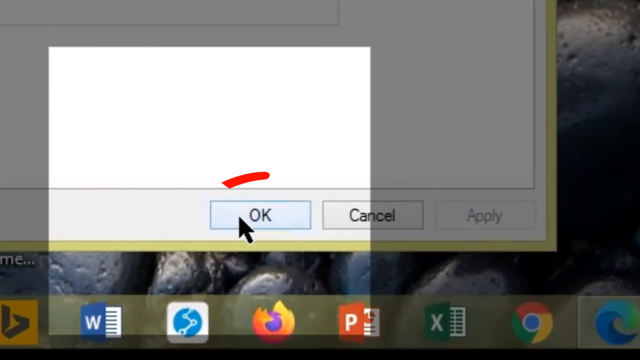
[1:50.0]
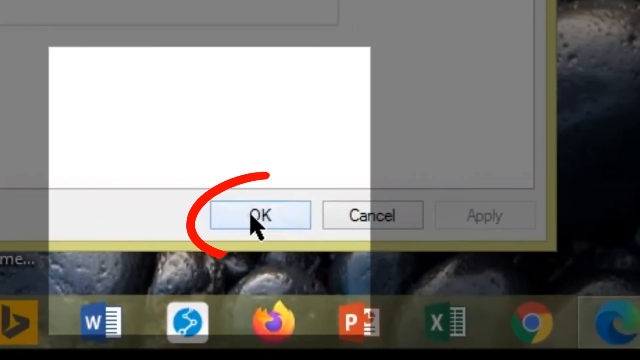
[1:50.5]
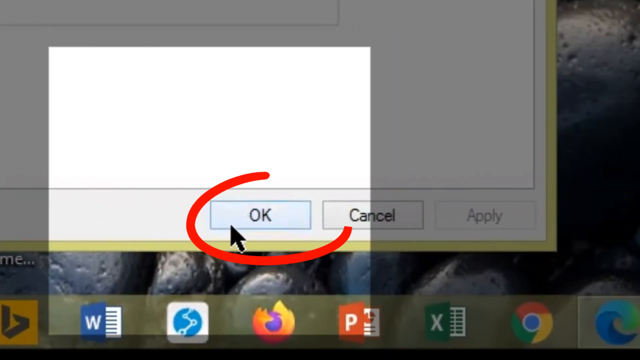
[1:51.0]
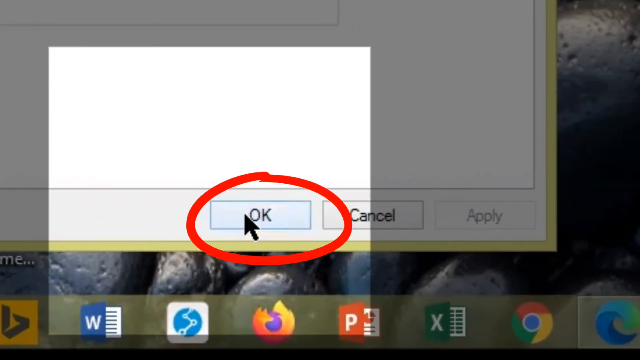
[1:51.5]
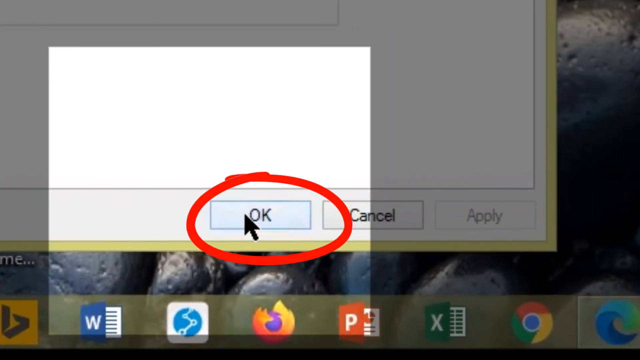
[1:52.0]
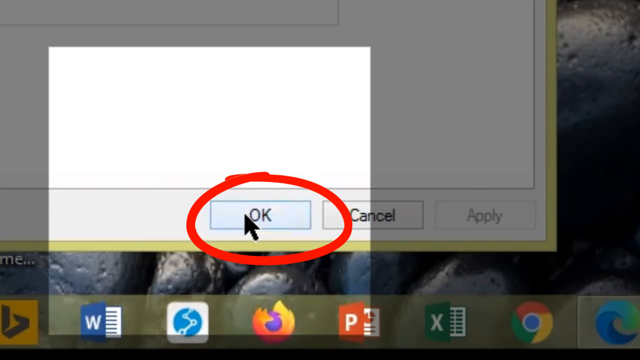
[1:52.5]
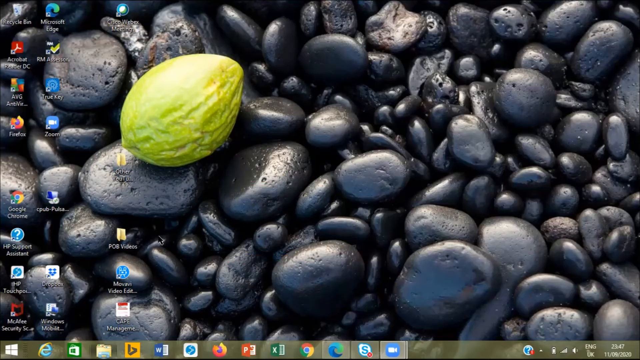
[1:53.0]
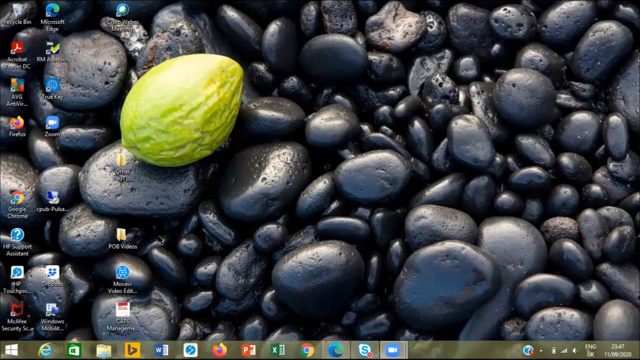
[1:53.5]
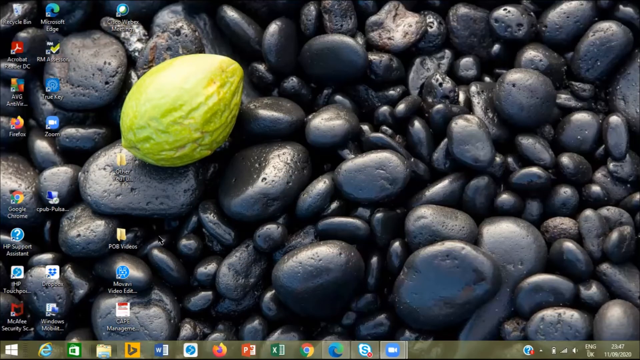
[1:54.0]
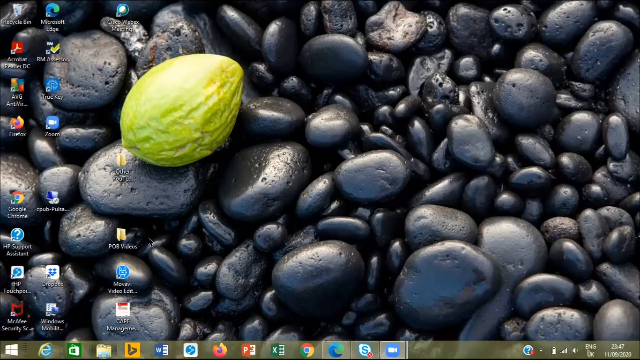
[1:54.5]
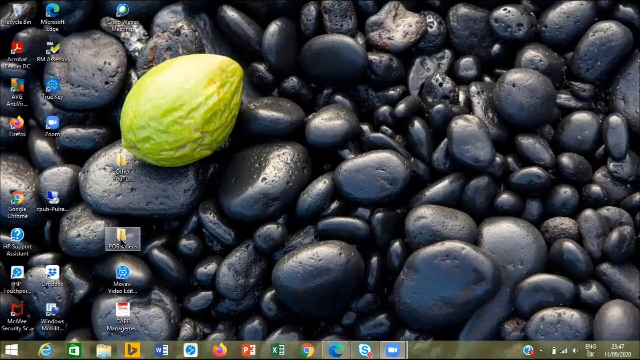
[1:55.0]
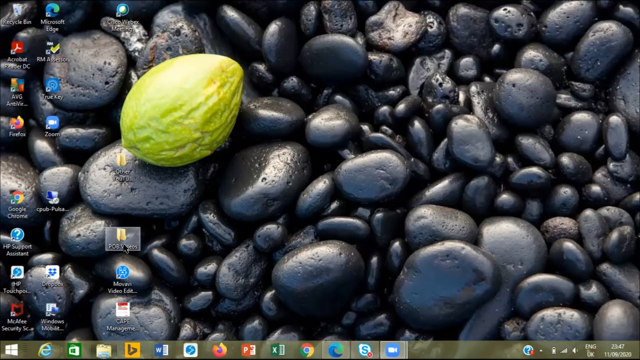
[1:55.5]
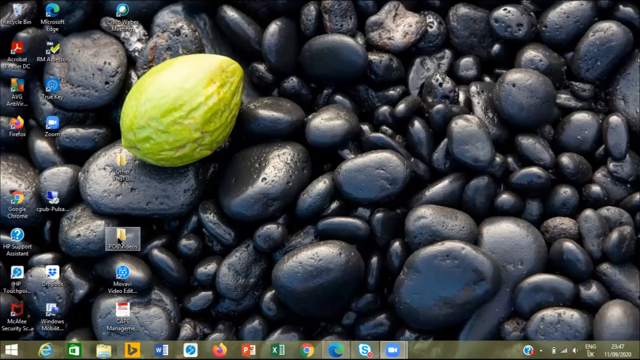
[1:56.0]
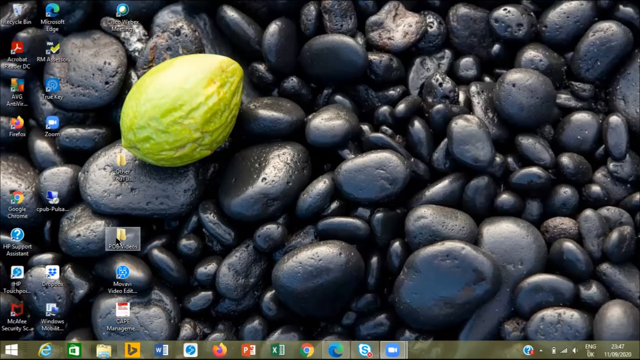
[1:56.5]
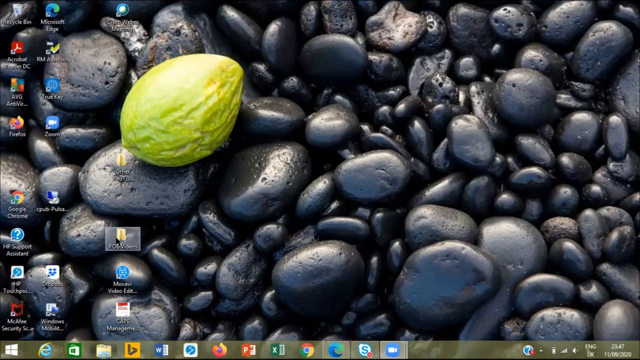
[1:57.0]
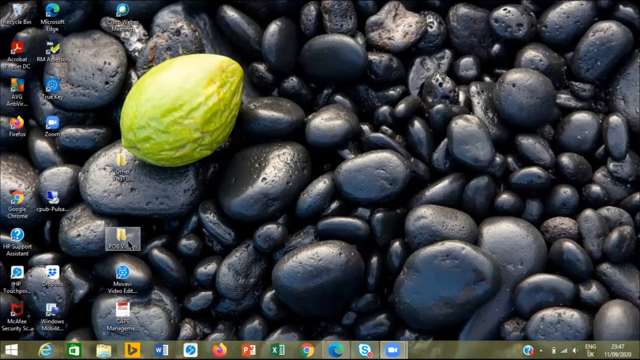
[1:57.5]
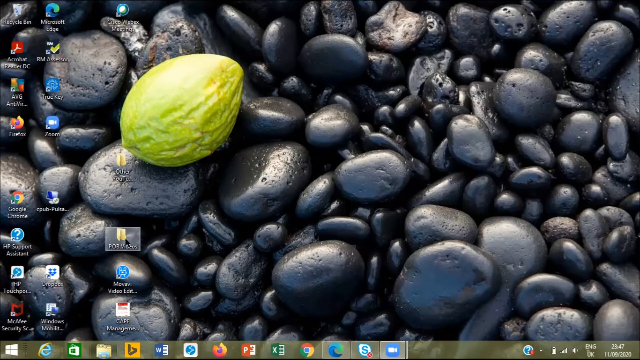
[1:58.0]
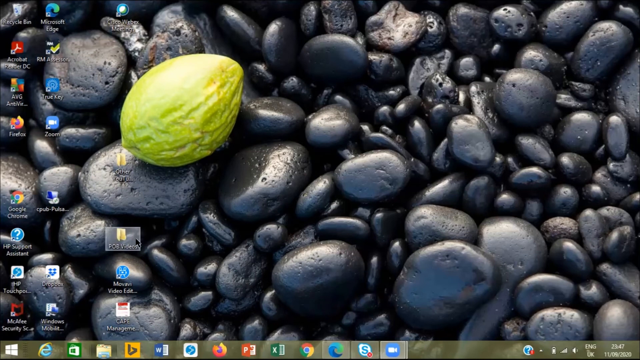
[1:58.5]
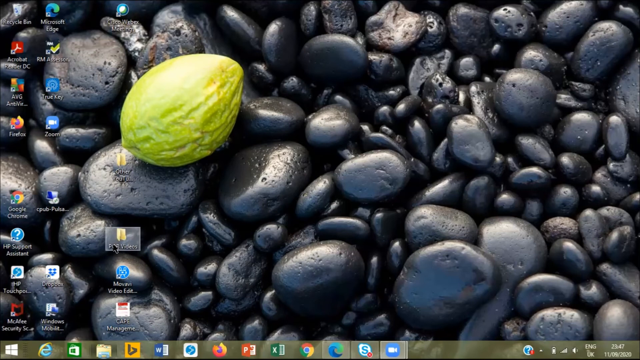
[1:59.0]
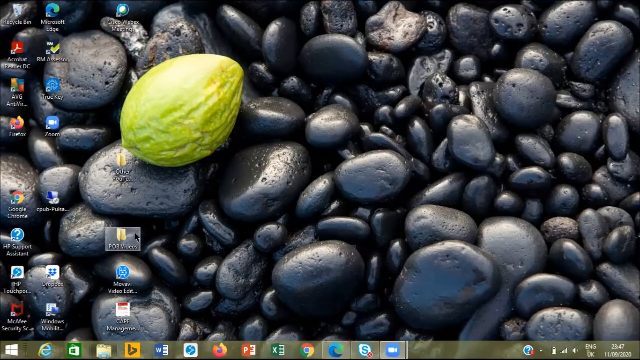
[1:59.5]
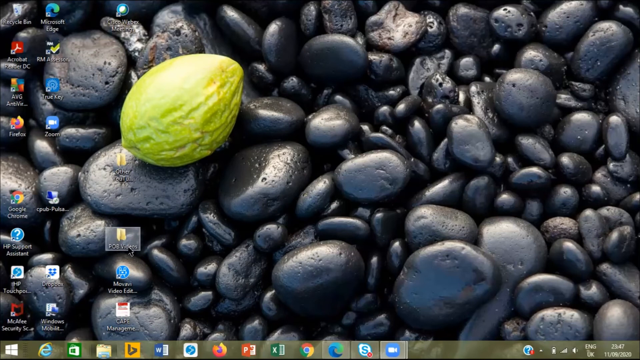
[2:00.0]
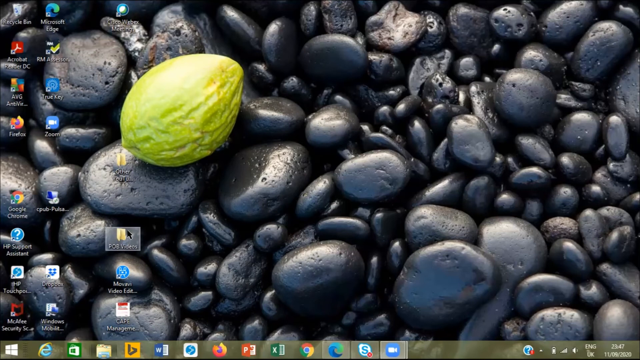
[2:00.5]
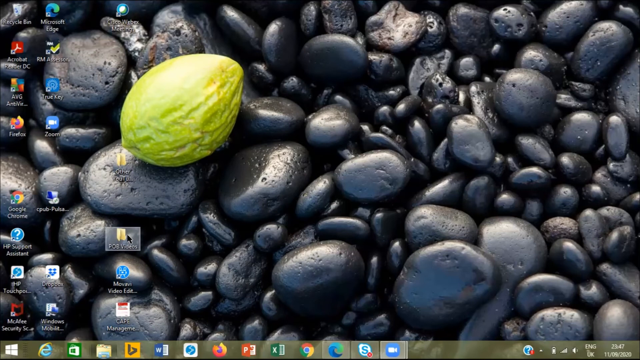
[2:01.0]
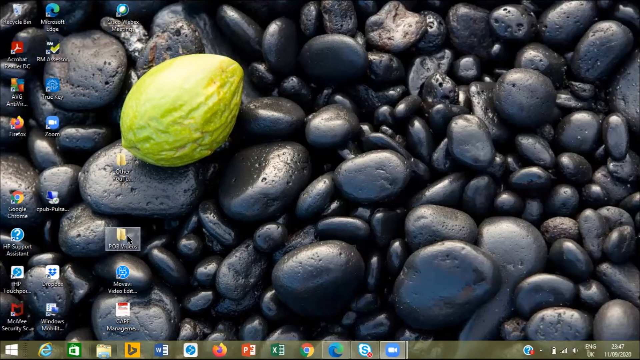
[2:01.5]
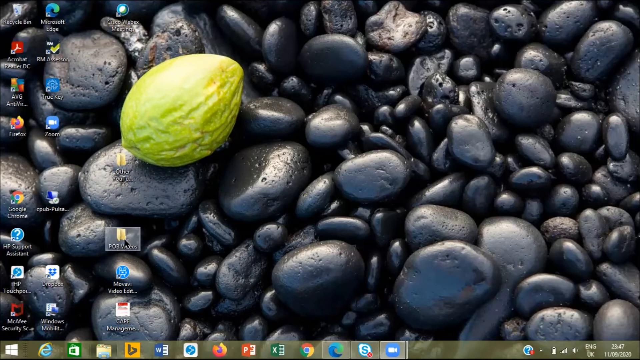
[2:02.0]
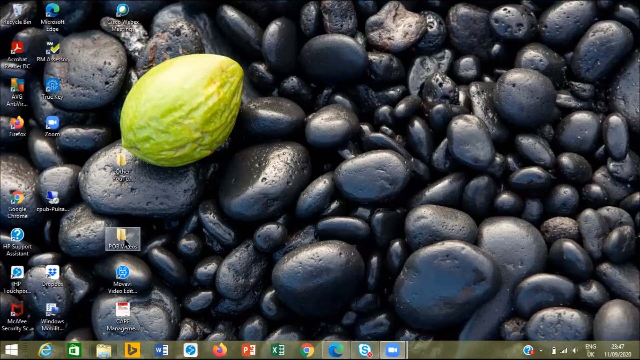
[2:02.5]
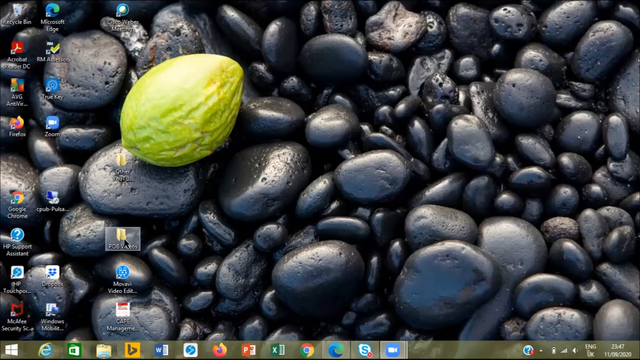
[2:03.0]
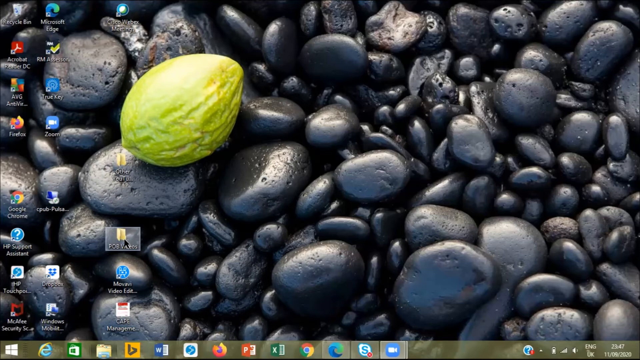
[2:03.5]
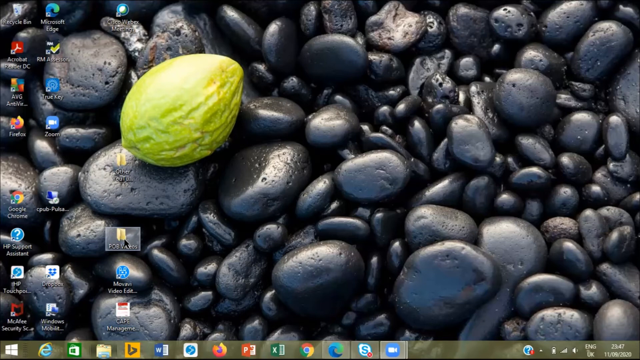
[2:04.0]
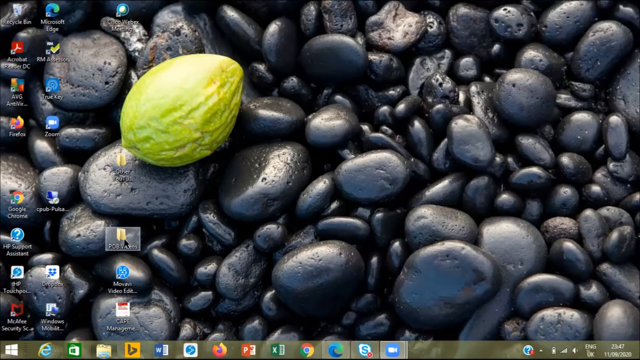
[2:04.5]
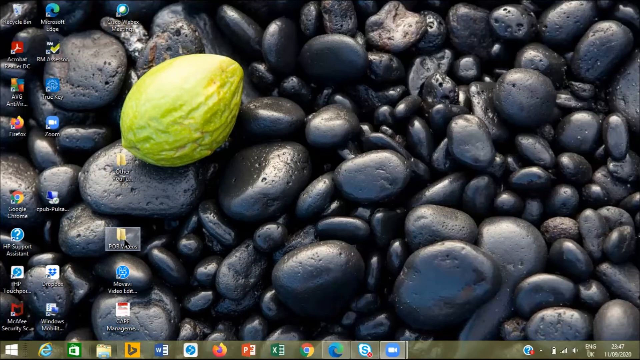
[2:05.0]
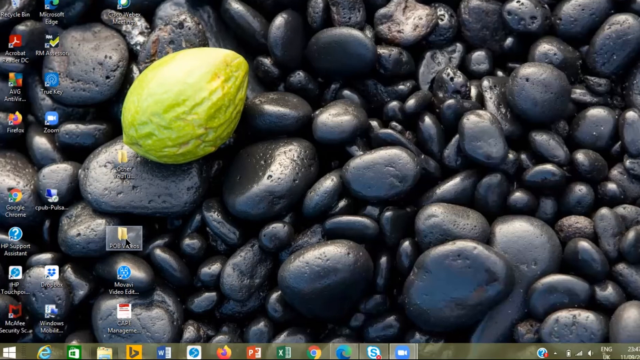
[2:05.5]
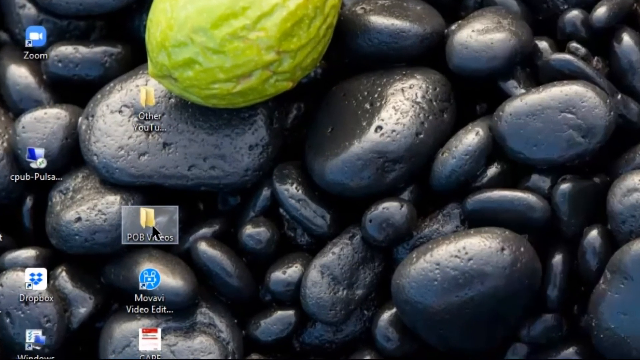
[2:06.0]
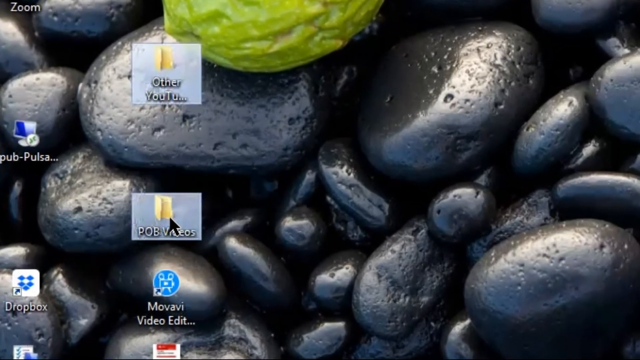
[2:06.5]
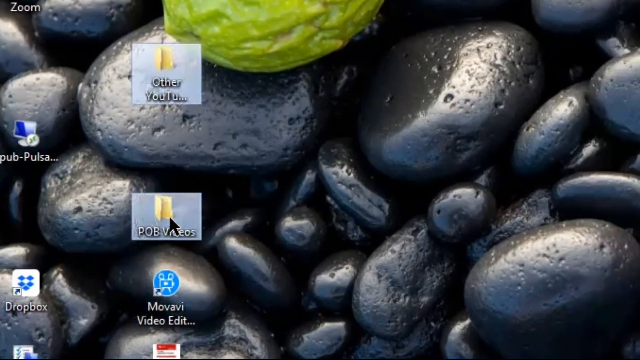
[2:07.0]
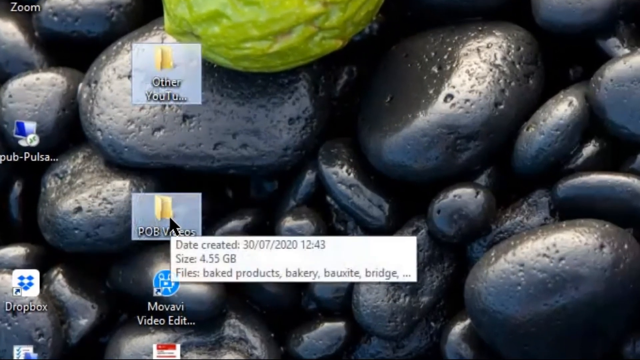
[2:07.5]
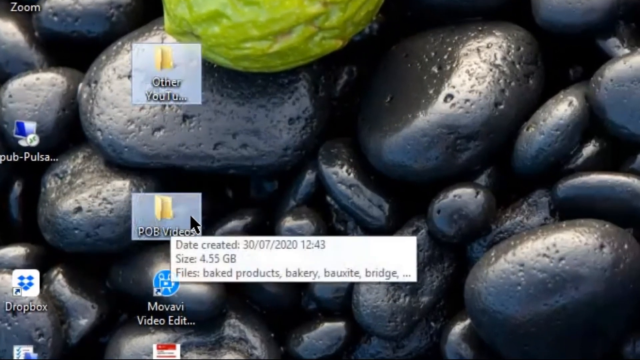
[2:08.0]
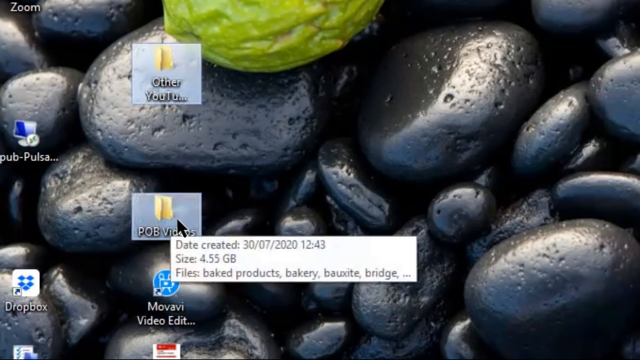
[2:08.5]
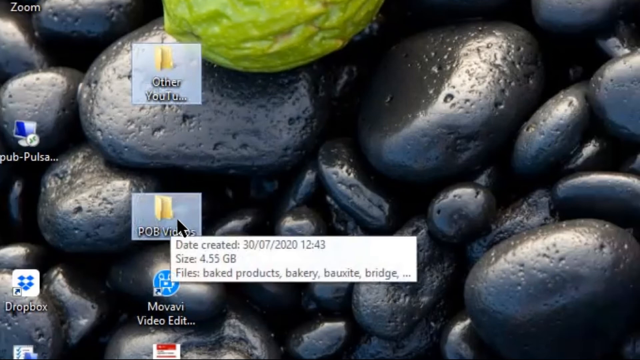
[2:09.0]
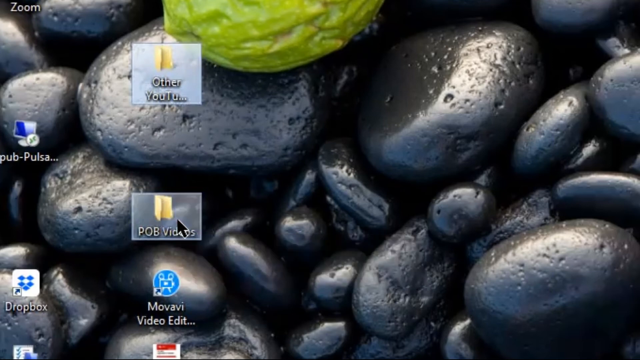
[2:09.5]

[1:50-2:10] The square flashlight highlight is on OK, a red circle goes around it, and OK is clicked. This returns to the computer home screen, where the mouse is over a file whose label is too small to read. The cursor circles all around it, kind of rests on it for a second, and the view zooms in, showing "POV videos". It is right-clicked, and a little pop-up shows "Date Created, 30-07-2020 at 1243", a size of 4.55 gigabytes, and files listed as "Baked Products, Bakery, Box Site, Bridge". The person clicks on it, and the computer goes back to the home screen, which has a bunch of quick files that can be clicked without going to the search button.